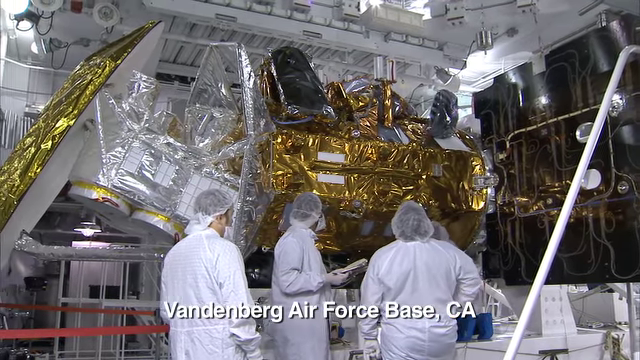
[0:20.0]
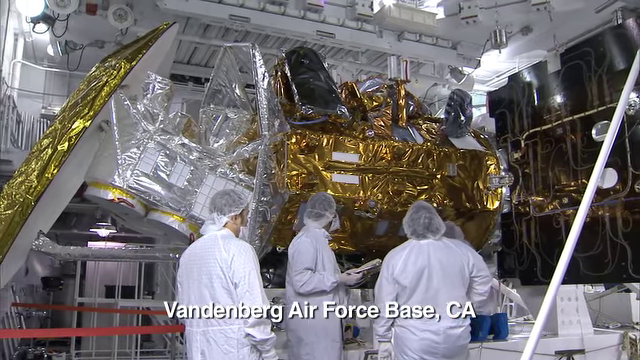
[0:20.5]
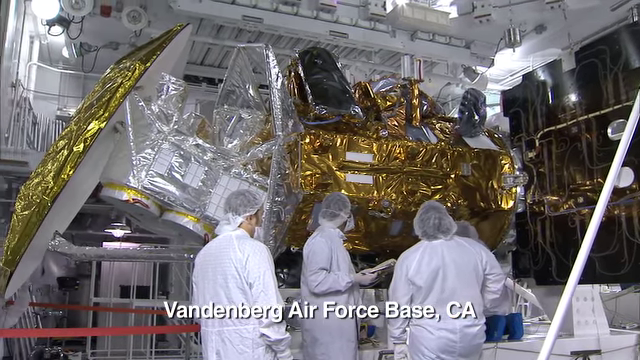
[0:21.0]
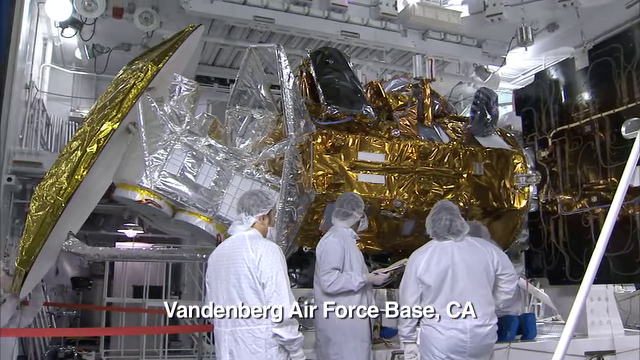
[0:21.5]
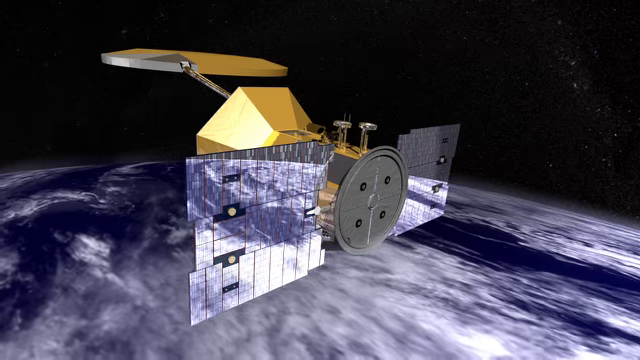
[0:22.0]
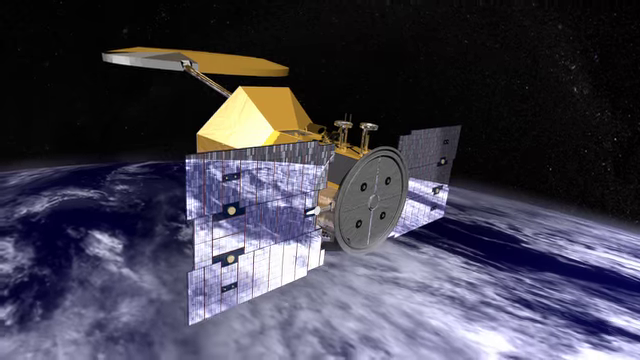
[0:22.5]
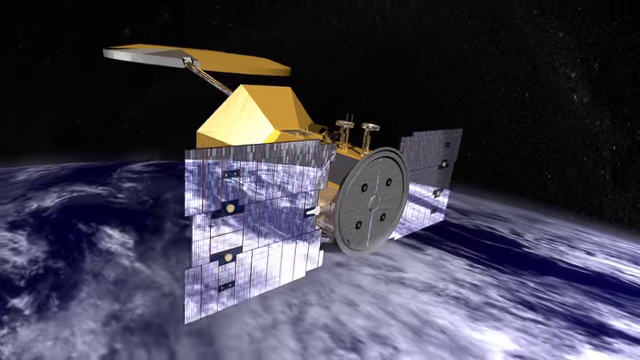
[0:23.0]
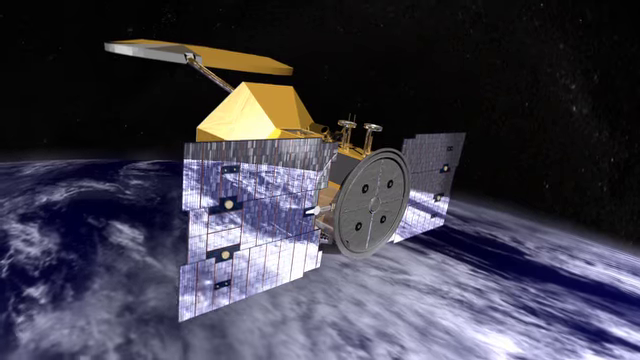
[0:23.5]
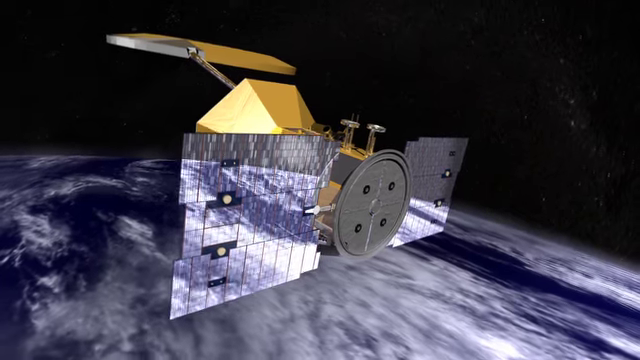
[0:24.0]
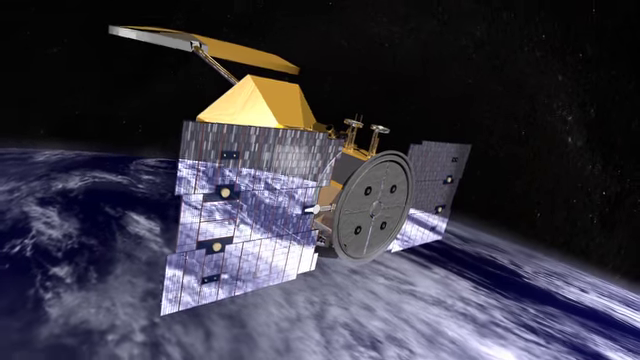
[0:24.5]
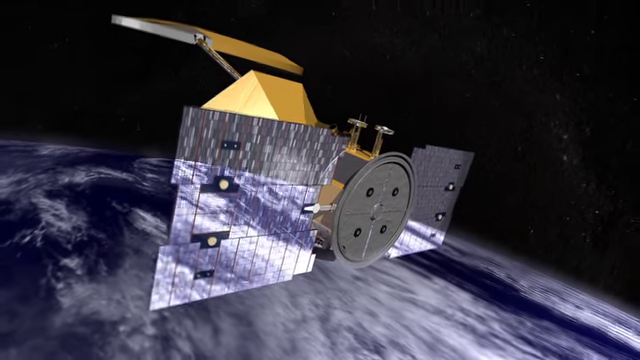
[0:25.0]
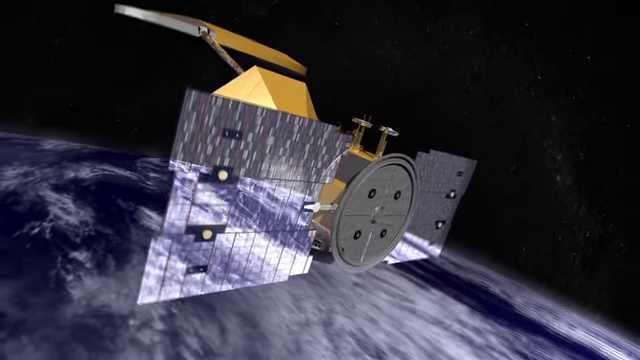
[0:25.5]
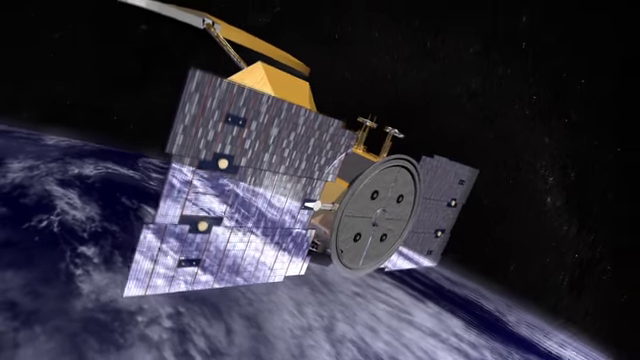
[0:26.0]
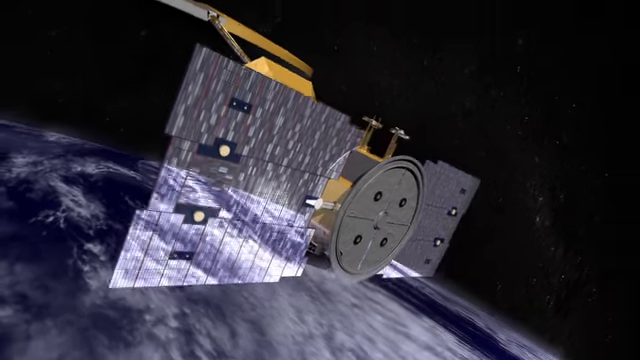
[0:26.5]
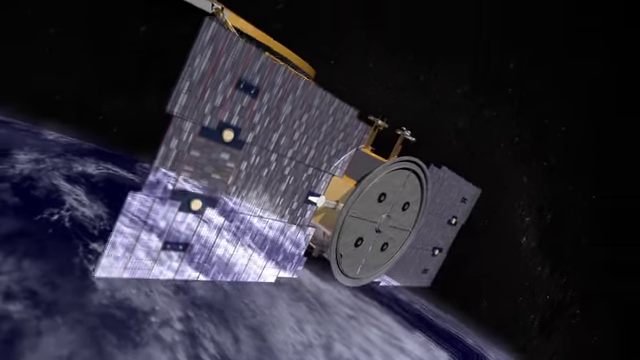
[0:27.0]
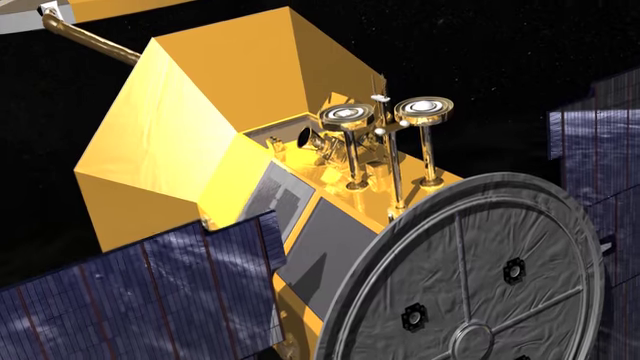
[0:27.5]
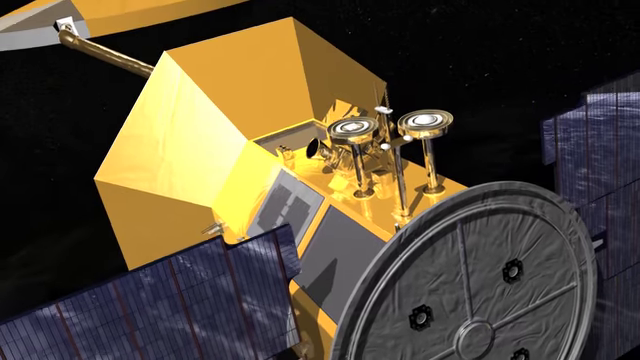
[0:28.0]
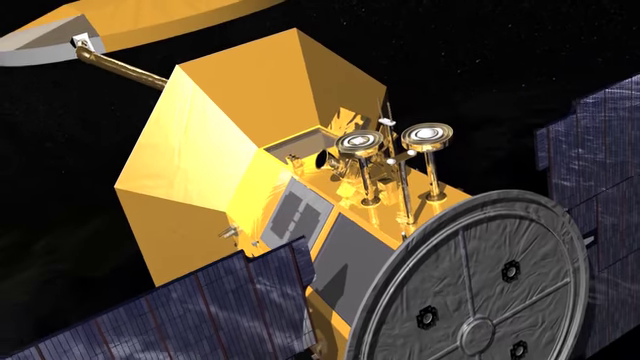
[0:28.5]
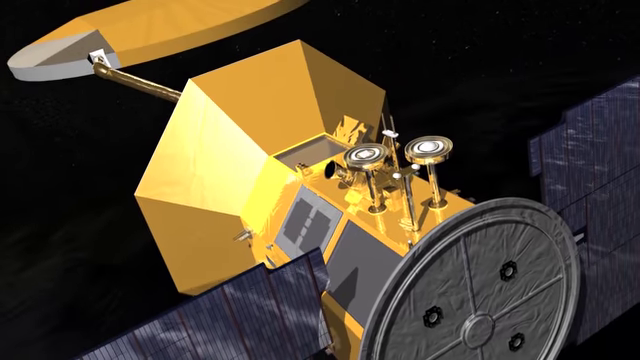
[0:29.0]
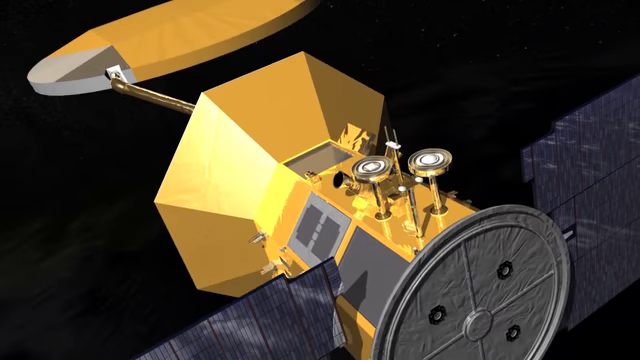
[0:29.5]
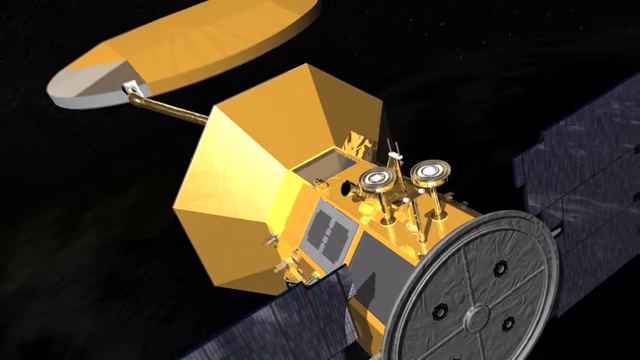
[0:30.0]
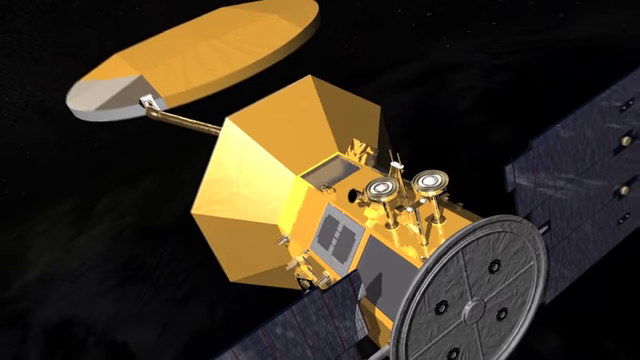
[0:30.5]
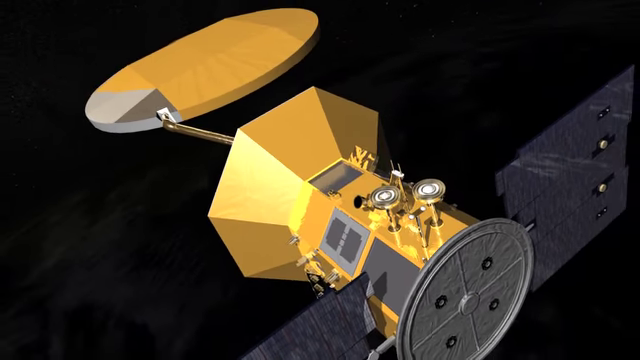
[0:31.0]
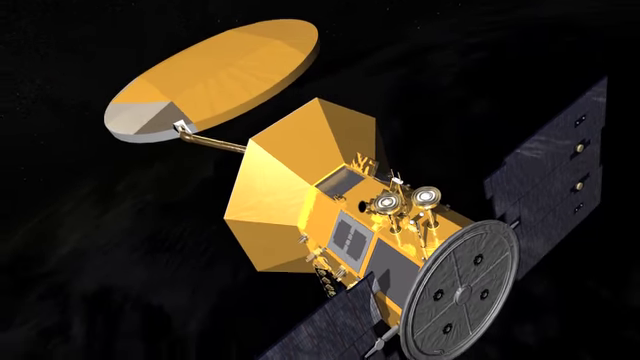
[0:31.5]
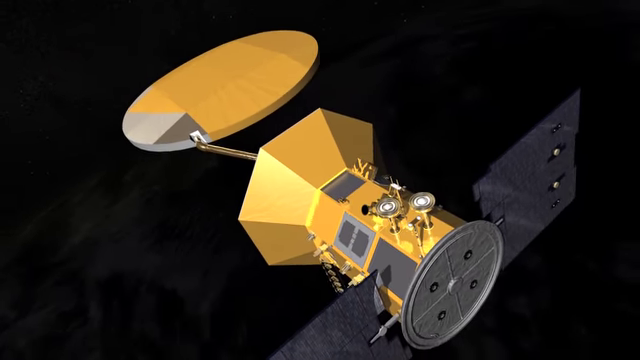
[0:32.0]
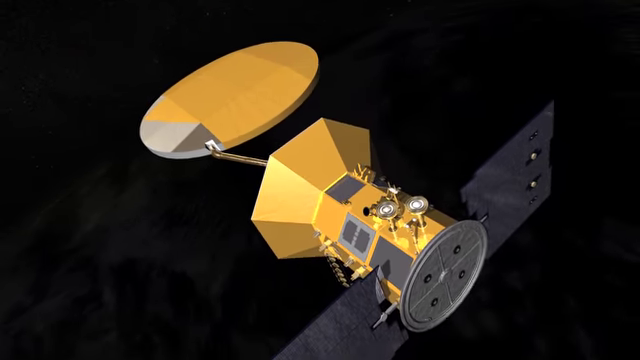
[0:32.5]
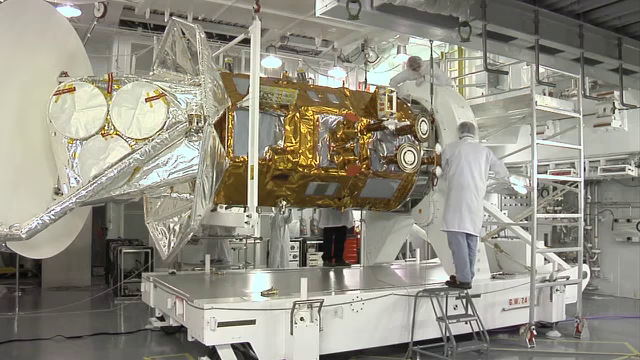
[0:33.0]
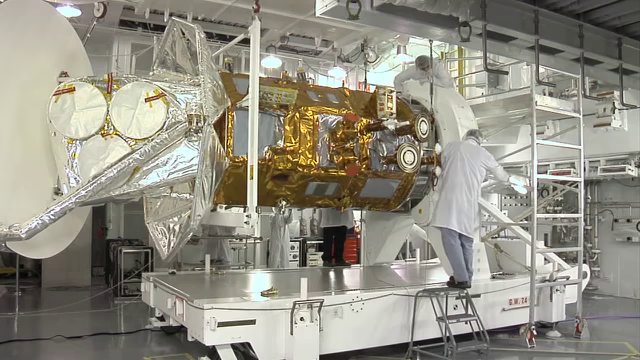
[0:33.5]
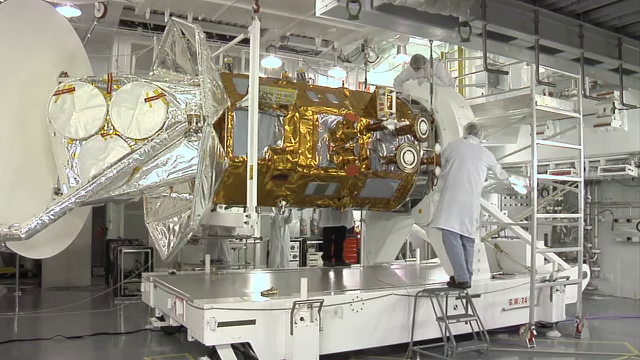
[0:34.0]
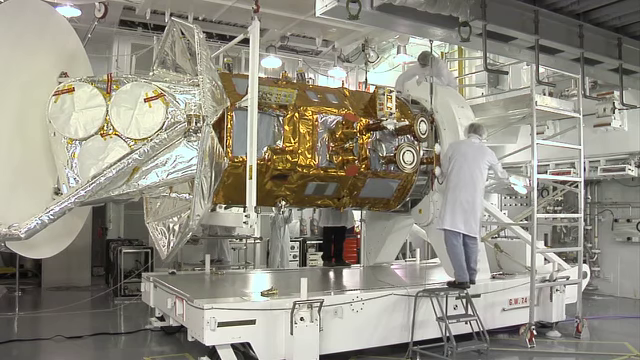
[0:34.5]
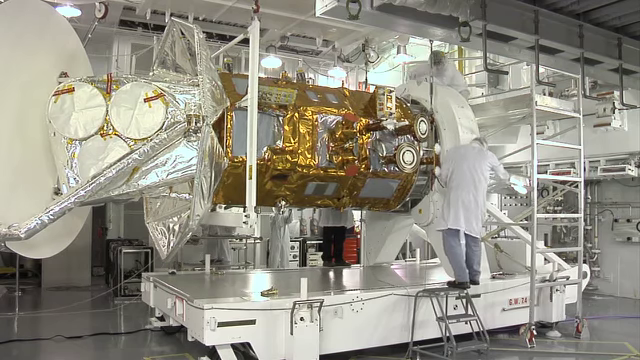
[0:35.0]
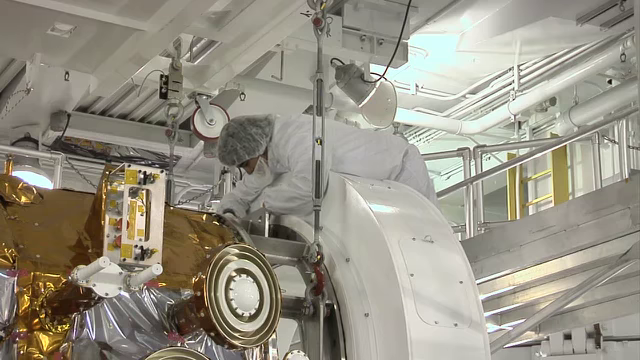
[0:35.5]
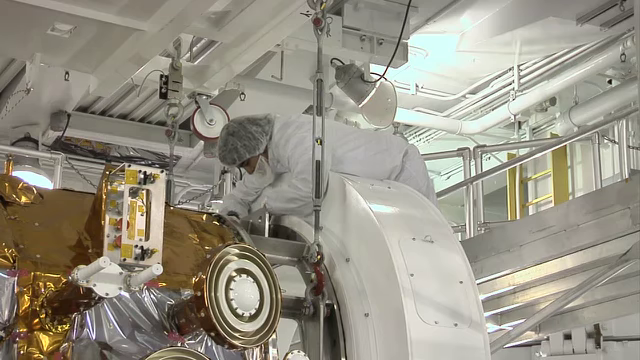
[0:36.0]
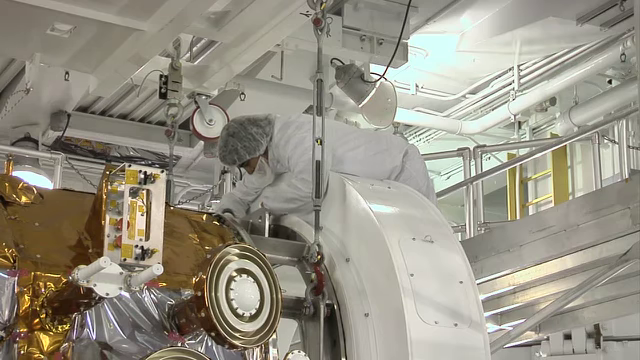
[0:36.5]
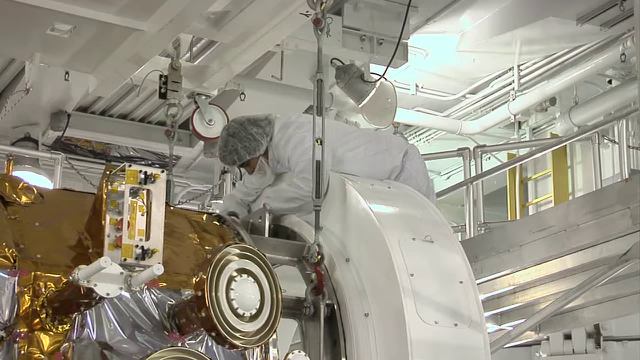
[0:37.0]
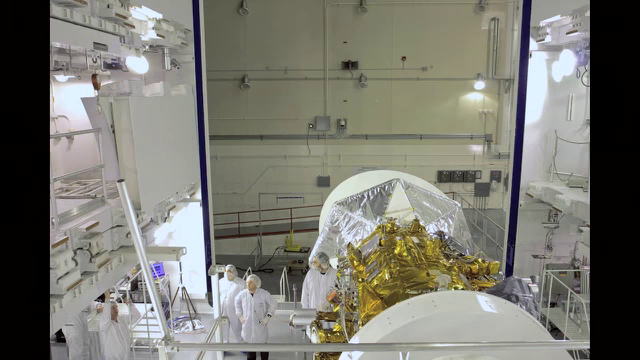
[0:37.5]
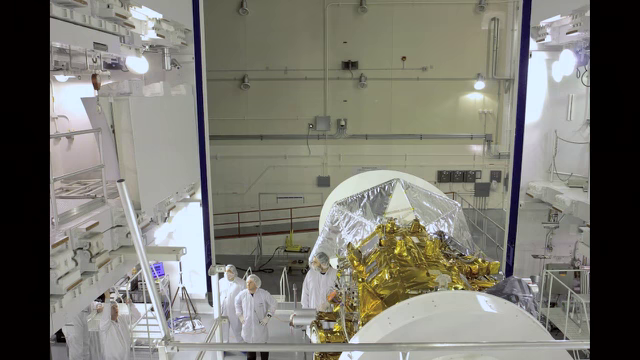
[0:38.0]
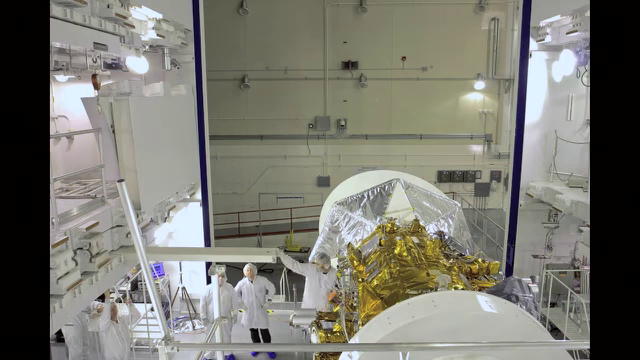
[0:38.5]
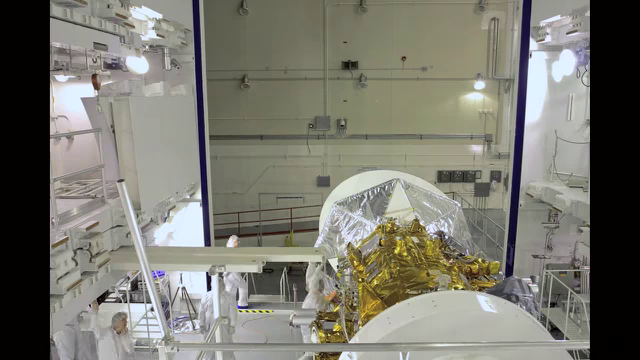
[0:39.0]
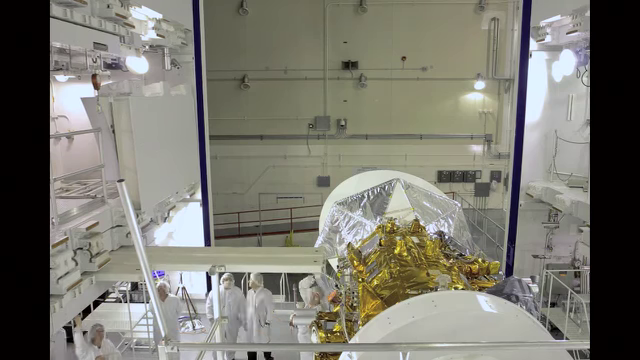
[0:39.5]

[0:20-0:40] At Vandenberg Air Force Base in California, the Aquarius spacecraft is shown, apparently covered in gold tinfoil and plastic, with workers standing there dressed in white with hairnets, masks and white gloves. A demonstration then shows what Aquarius will look like: it appears to have a lot of solar panels to the side, and a rounded, sideways circle with four black dots and a little circle in the middle, shaped maybe like a pop can. At the very top are quadrilaterals on the outside, and beyond that is a line, probably metal, and a gold line that may be a wing. The spacecraft is shown going around in space, and the thing sticking out looks kind of like a surfboard. The video returns to Vandenberg Air Force Base, where two people work on the spacecraft, hooking things up and checking things; an area on one side could be the rockets. White metal pieces are put into place up to Aquarius, possibly in preparation for the solar panels.